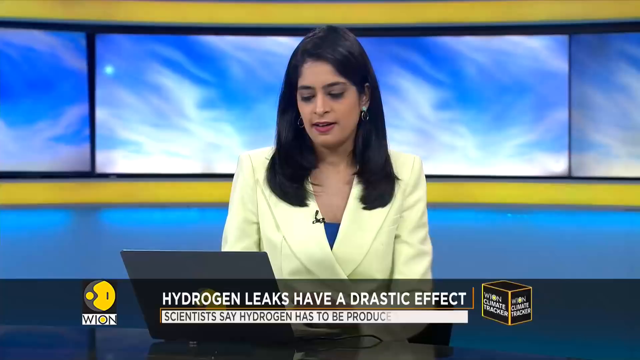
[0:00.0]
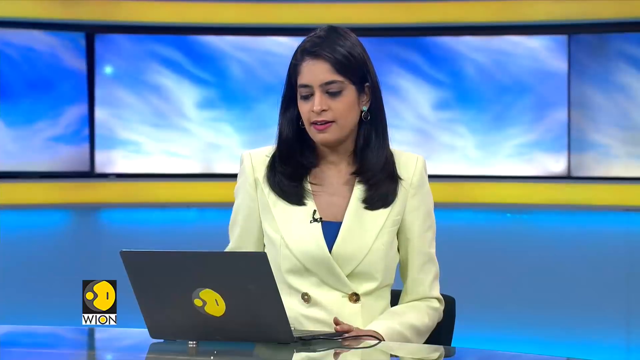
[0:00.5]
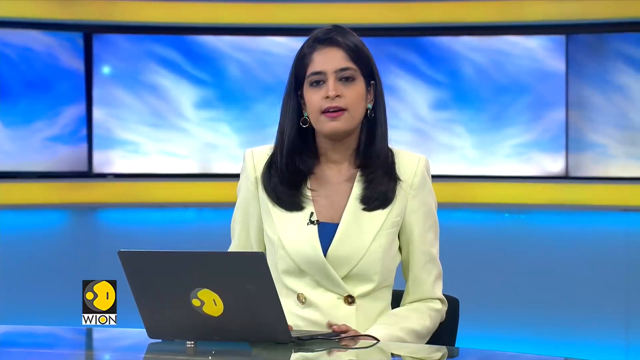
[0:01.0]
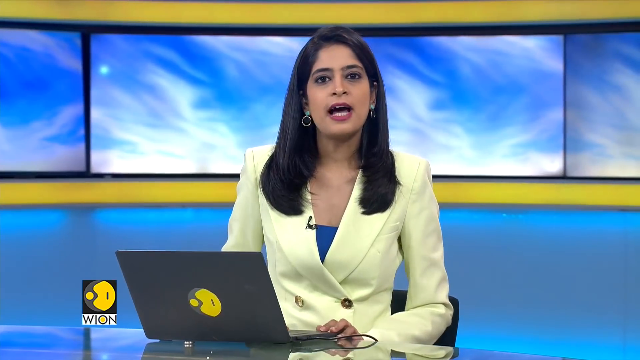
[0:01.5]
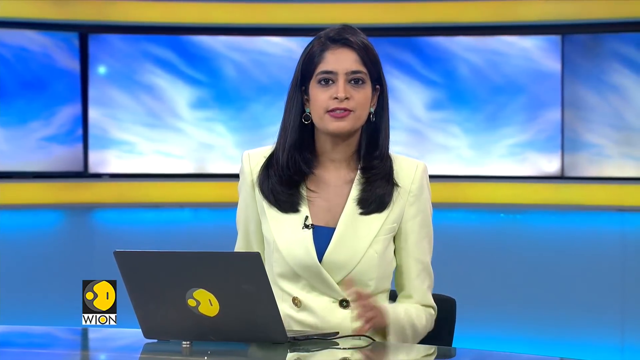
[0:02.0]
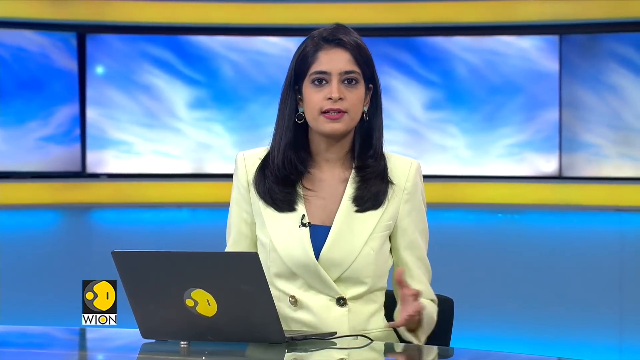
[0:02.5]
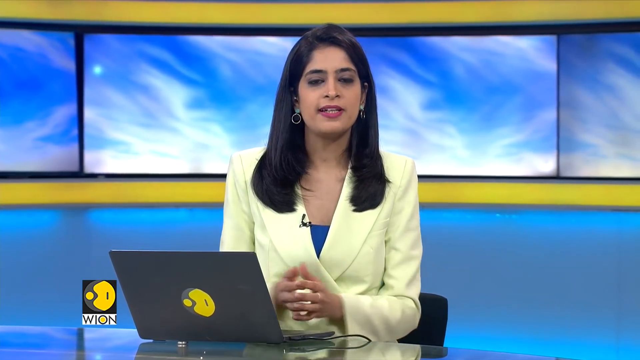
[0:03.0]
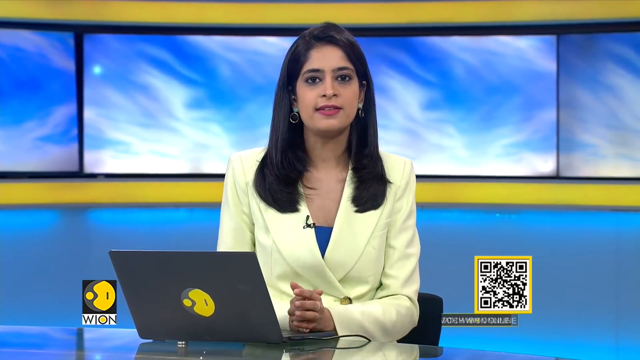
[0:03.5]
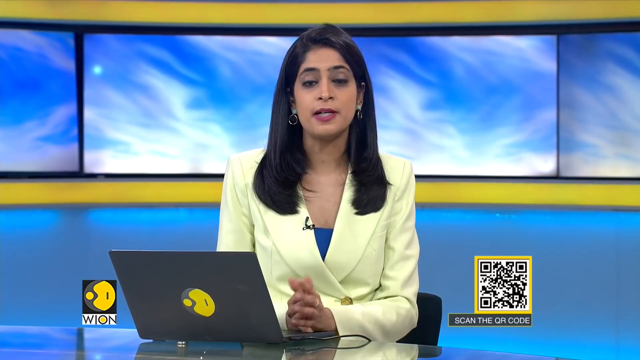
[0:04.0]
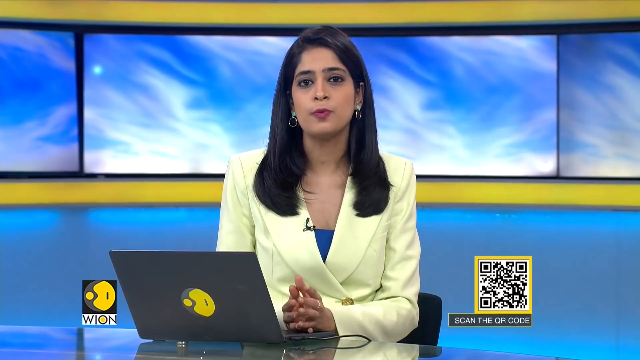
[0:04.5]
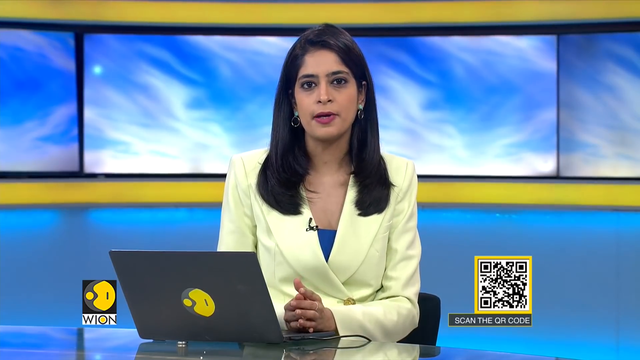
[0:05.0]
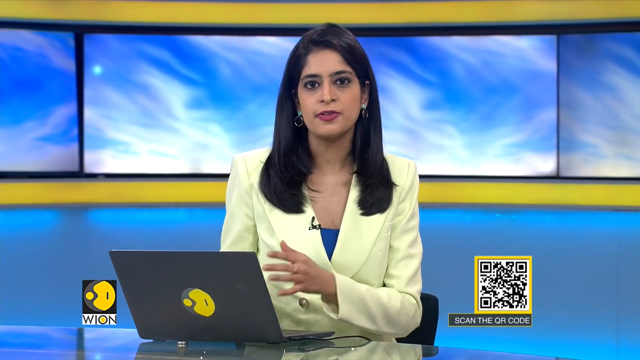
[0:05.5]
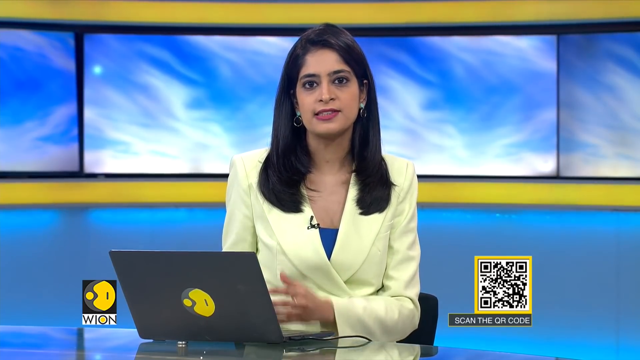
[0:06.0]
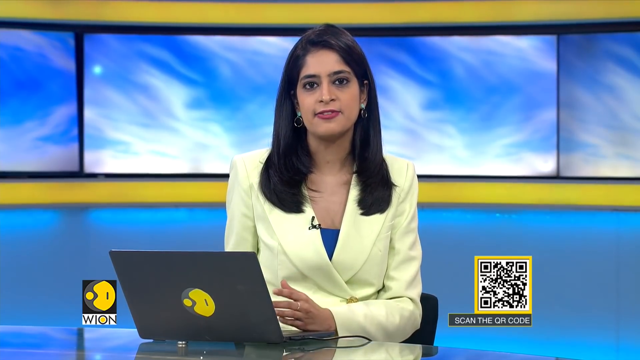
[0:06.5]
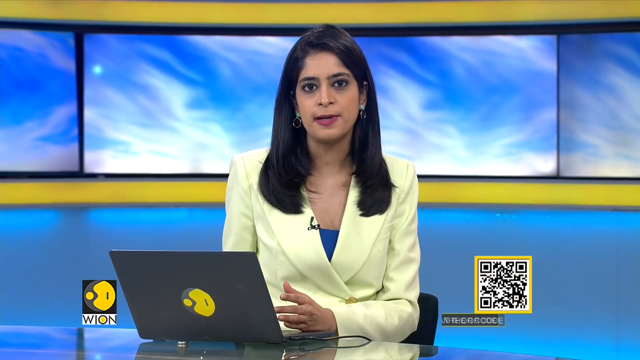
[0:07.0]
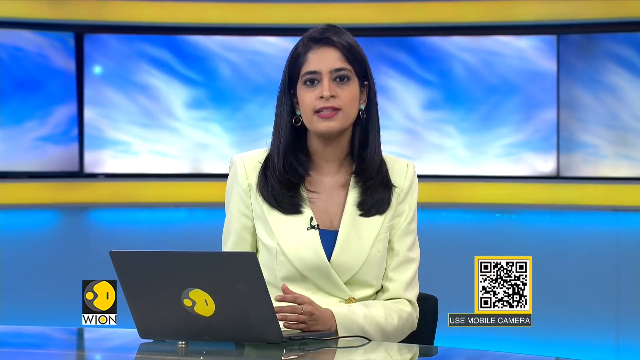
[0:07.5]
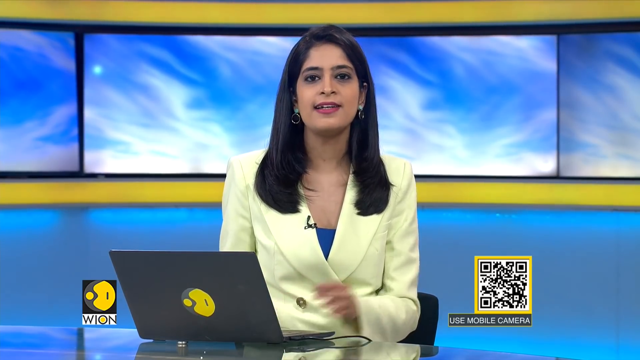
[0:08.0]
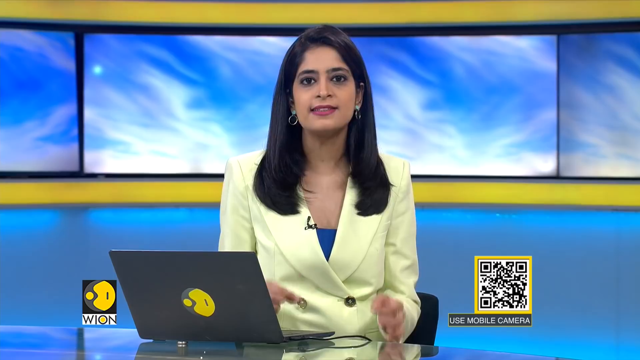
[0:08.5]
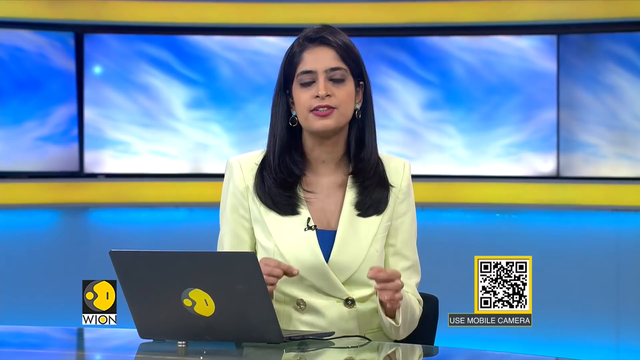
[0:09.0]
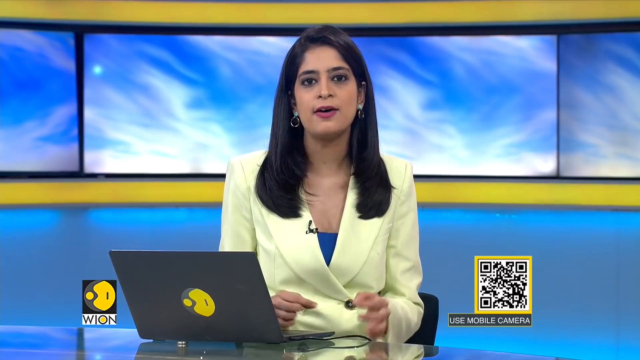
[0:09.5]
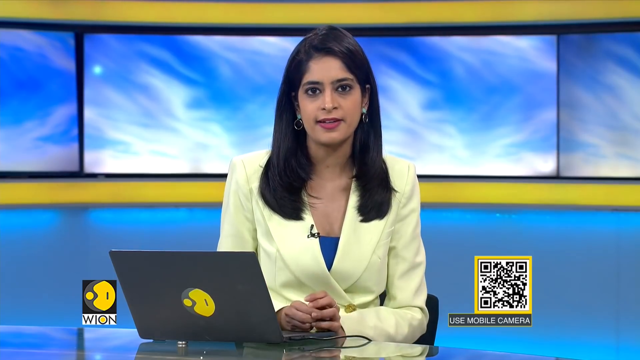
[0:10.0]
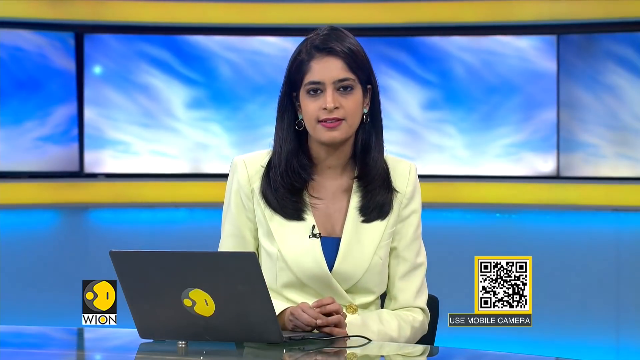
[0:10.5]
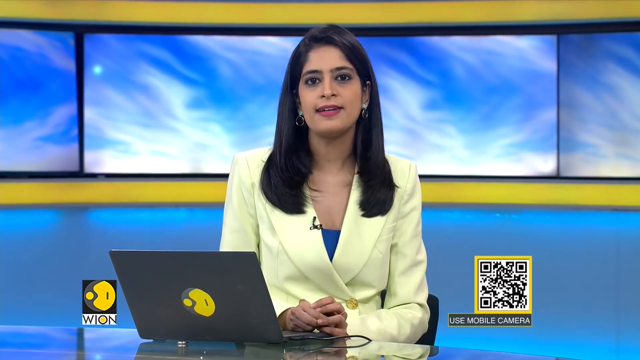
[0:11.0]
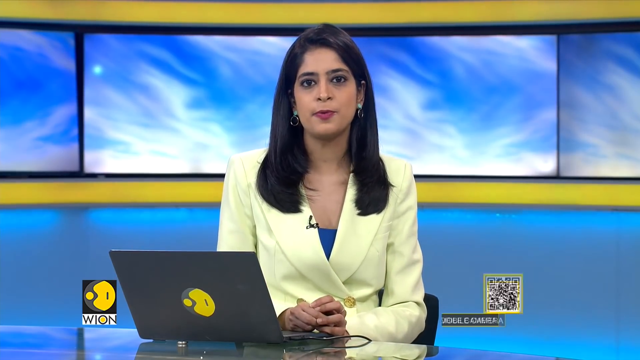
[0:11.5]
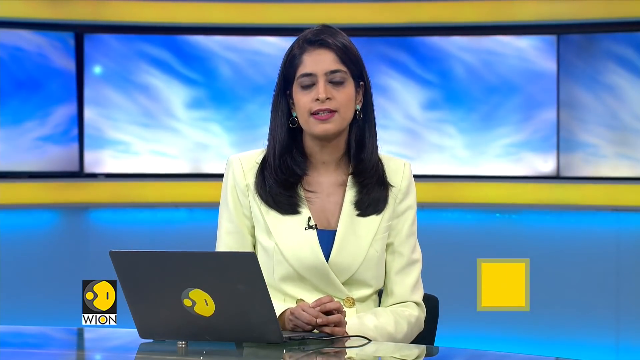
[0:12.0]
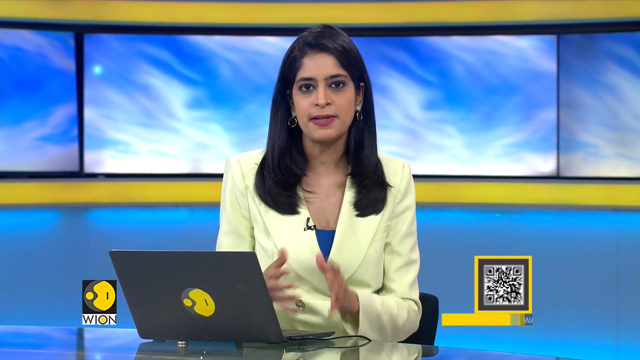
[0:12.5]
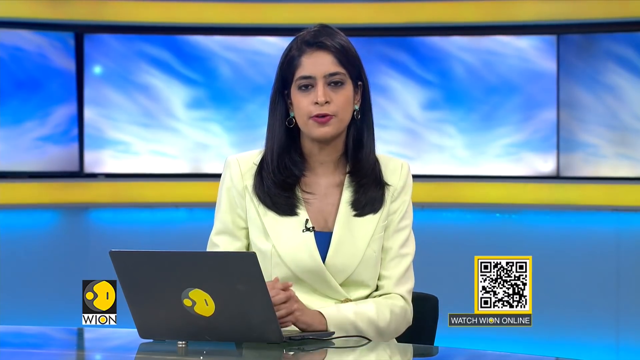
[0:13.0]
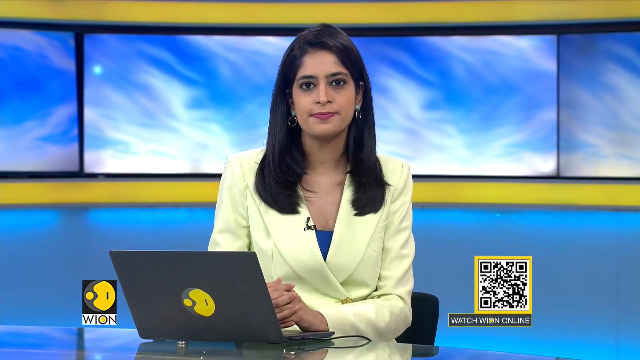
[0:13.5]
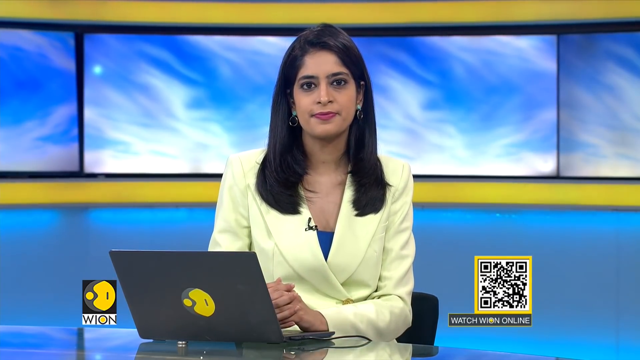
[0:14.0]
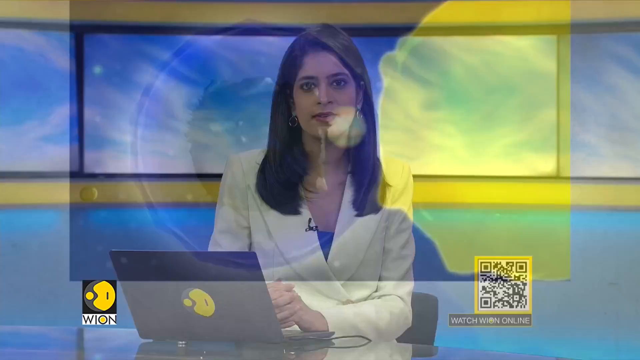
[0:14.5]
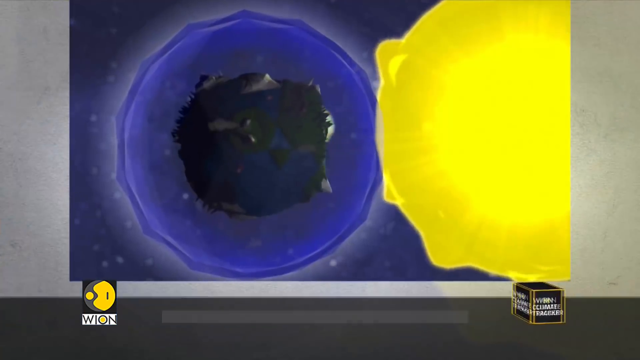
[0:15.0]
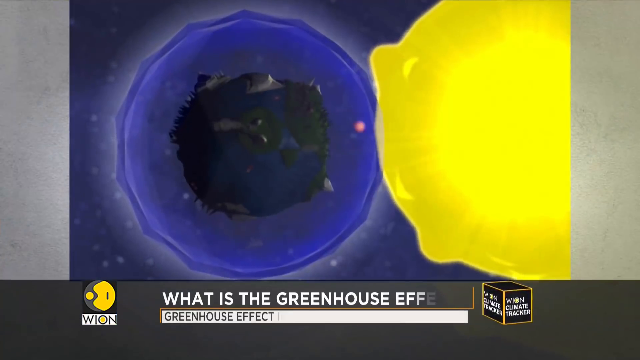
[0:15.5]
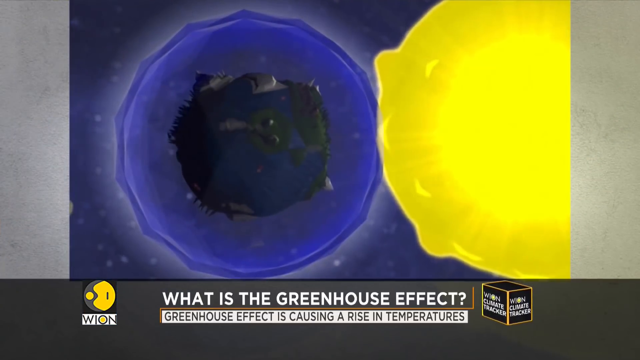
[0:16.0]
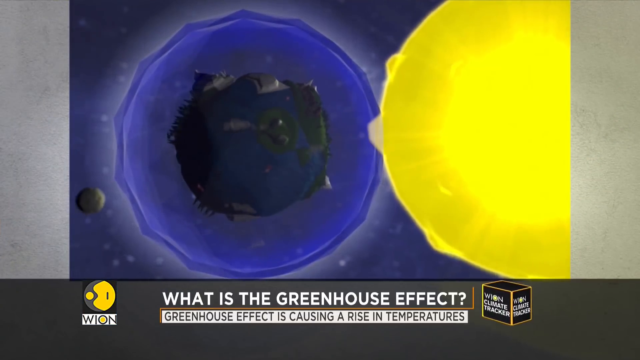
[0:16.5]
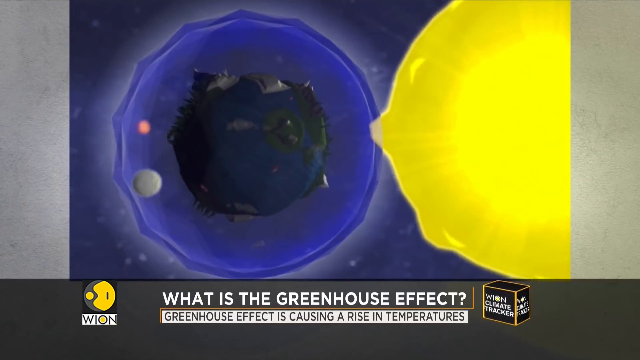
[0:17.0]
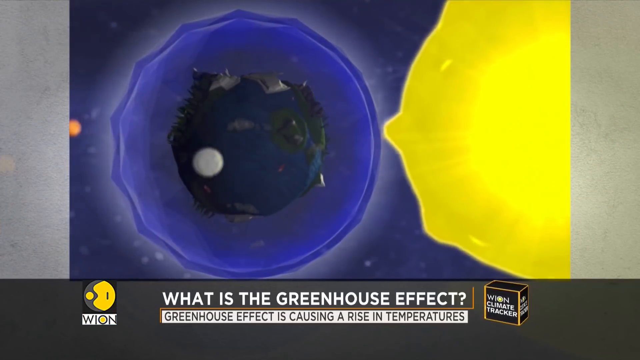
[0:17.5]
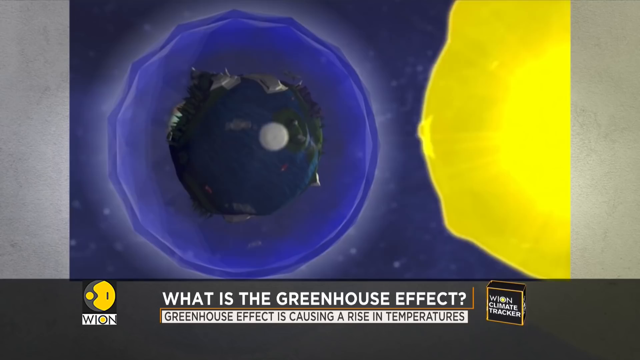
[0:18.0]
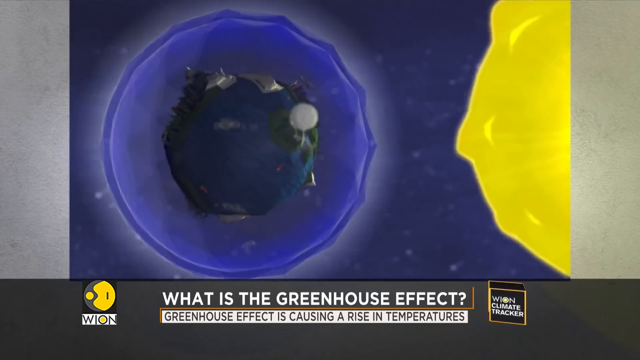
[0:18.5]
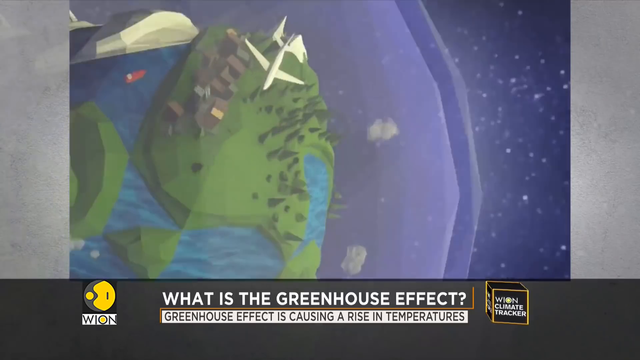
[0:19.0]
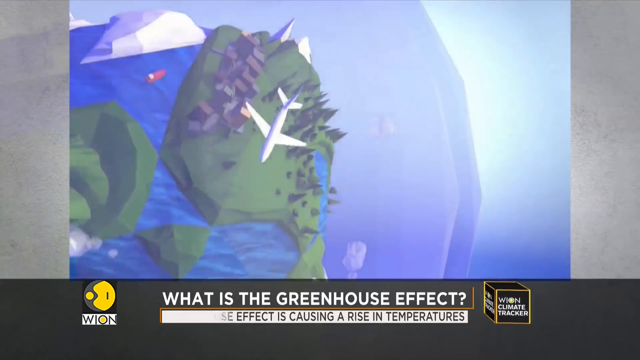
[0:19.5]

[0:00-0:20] A news broadcast opens with a woman behind the desk, wearing a cream-colored suit coat with a blue shirt underneath. On the desktop is an open laptop showing the news station's logo, a little yellow ball that resembles a Pac-Man chasing a yellow dot. The newscast logo is in the lower left part of the screen, and the call letters appear to be WION. On the right side of the screen is a barcode with the text "scan the code, use mobile camera." The video then transitions to a screen that reads "What is the greenhouse effect? Greenhouse effect is causing a rise in temperatures."